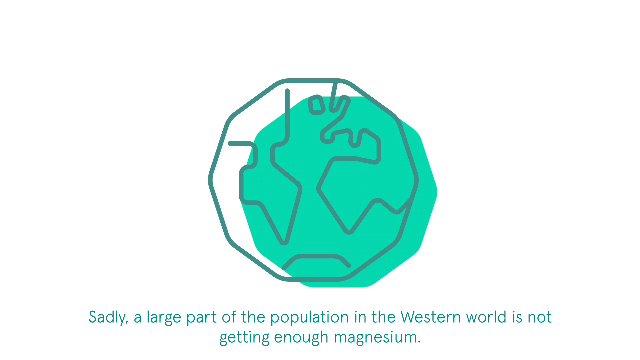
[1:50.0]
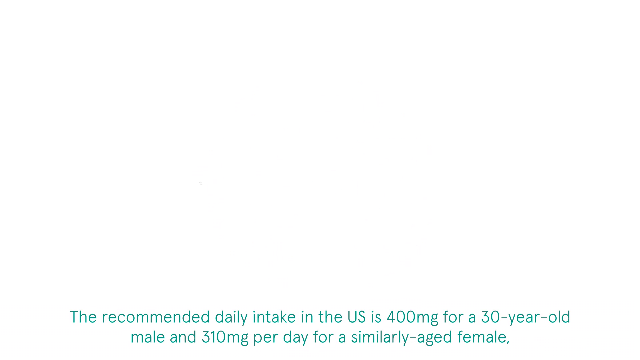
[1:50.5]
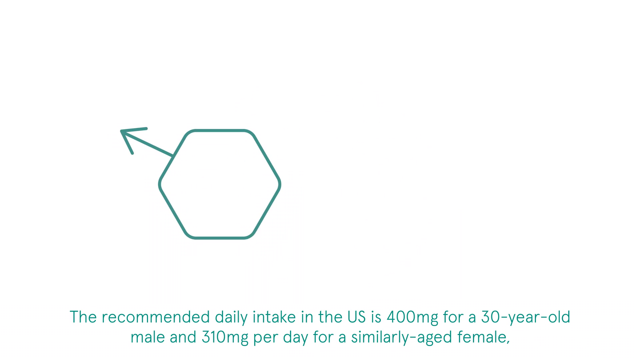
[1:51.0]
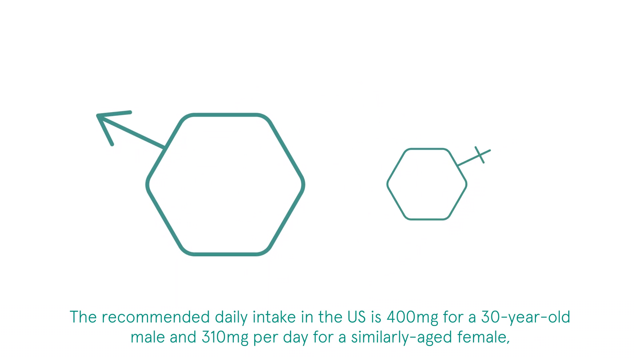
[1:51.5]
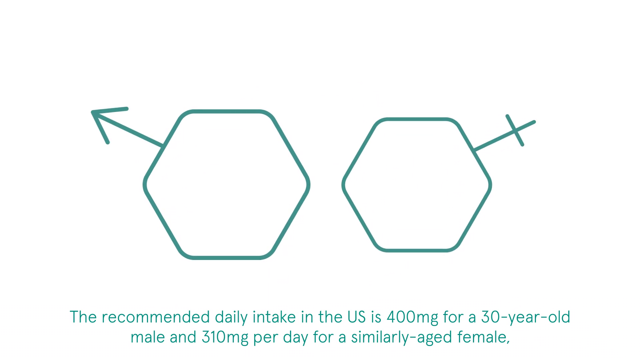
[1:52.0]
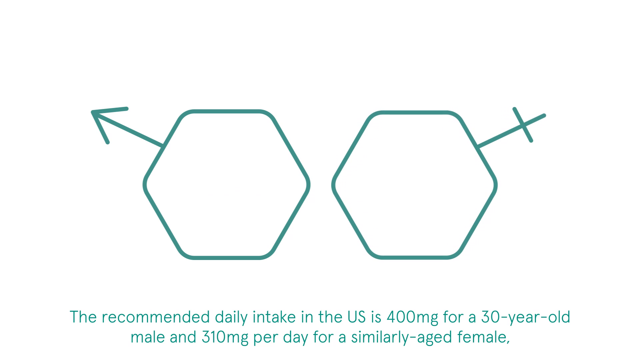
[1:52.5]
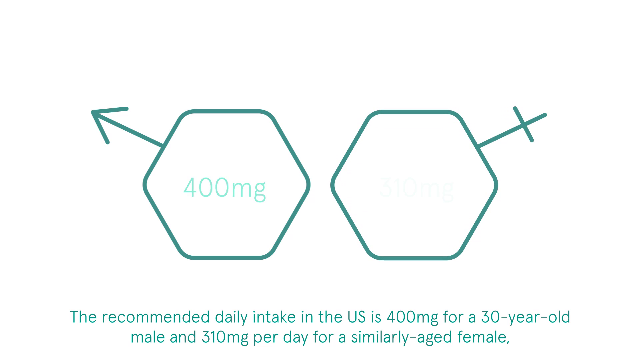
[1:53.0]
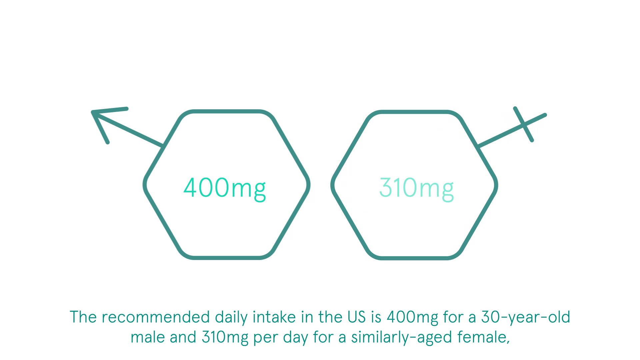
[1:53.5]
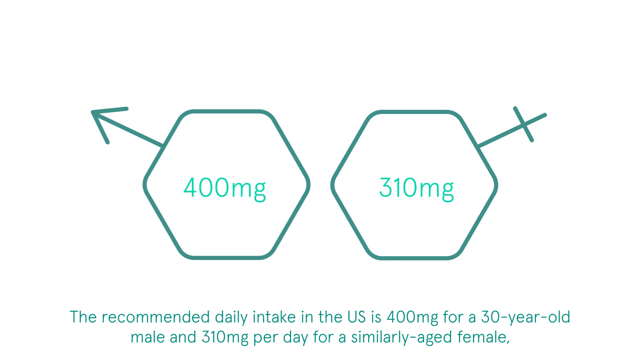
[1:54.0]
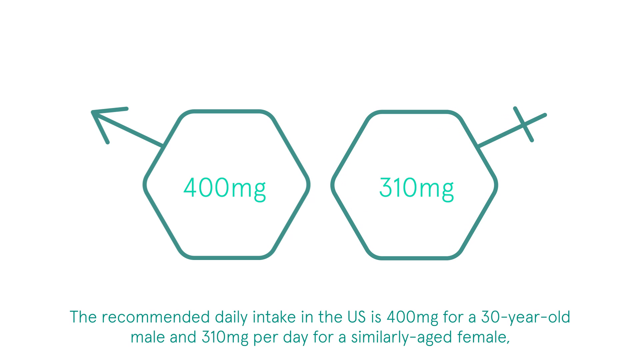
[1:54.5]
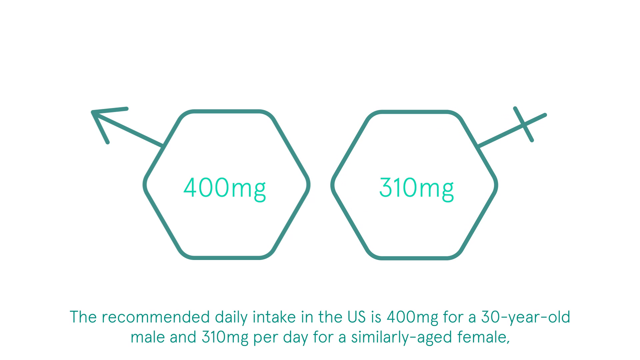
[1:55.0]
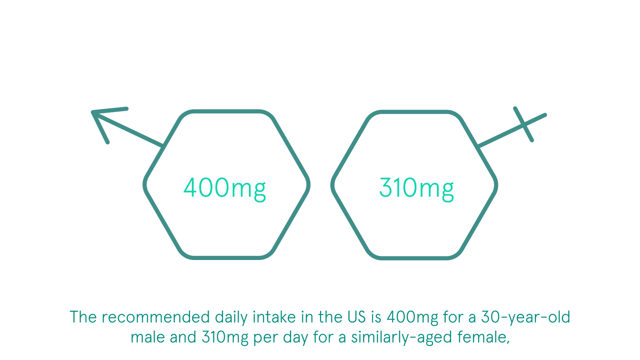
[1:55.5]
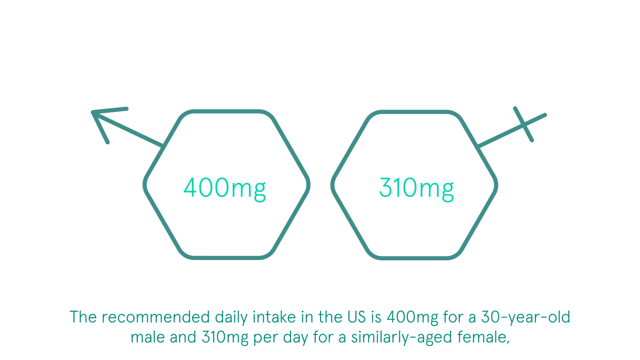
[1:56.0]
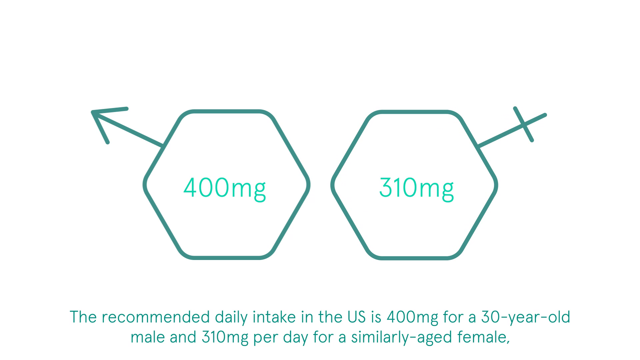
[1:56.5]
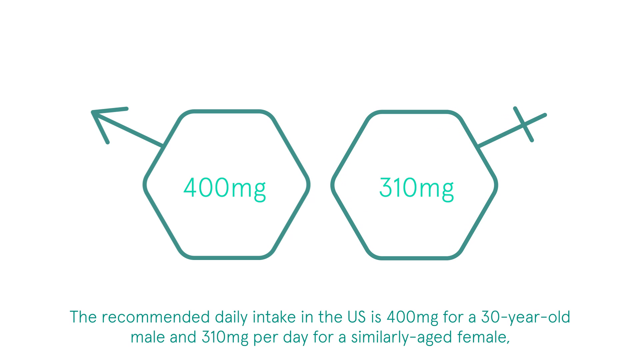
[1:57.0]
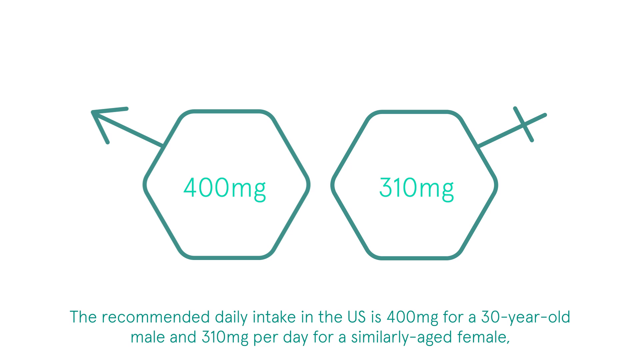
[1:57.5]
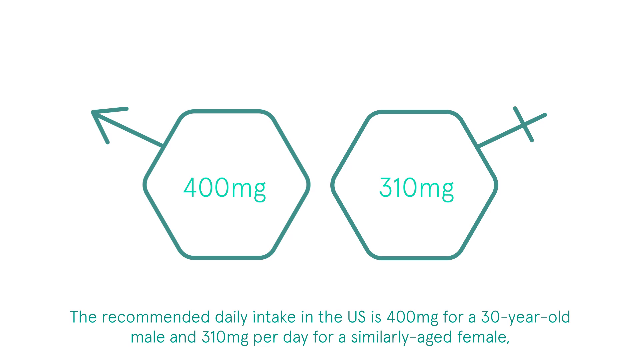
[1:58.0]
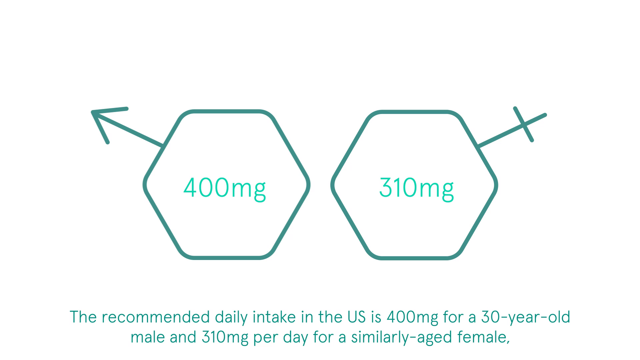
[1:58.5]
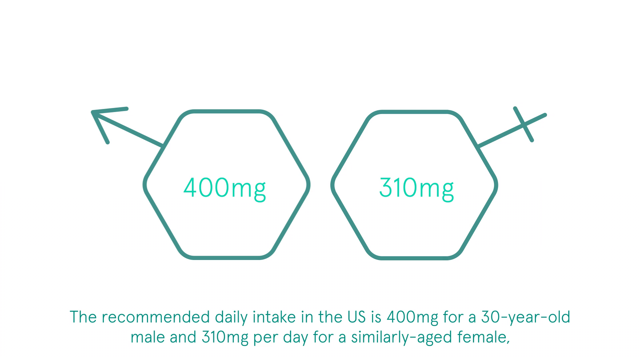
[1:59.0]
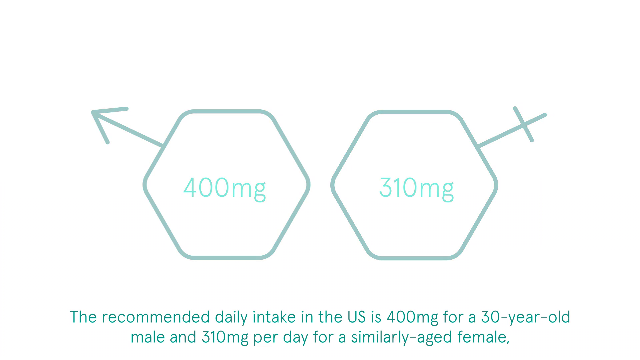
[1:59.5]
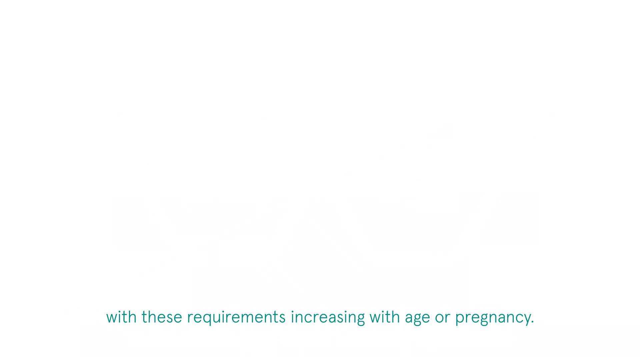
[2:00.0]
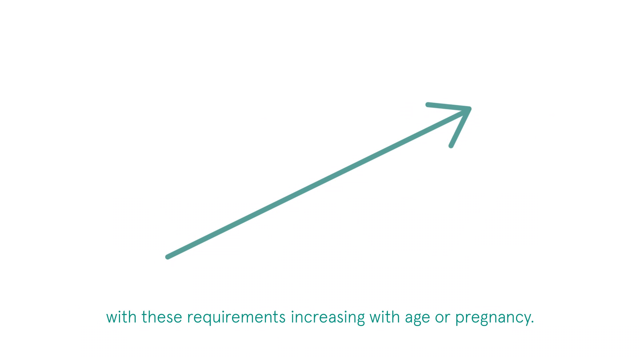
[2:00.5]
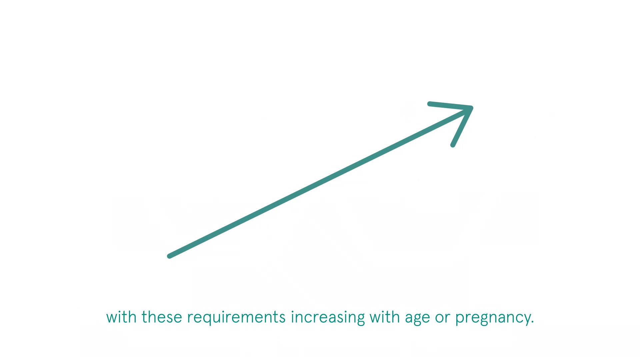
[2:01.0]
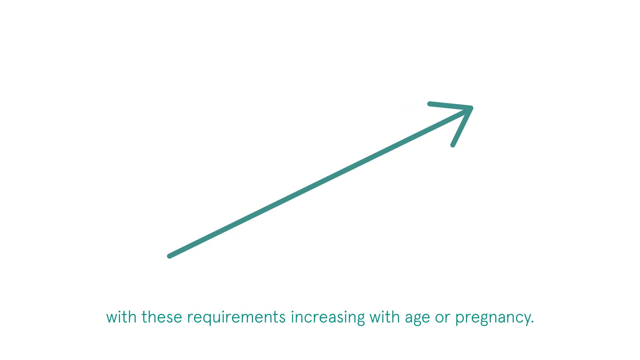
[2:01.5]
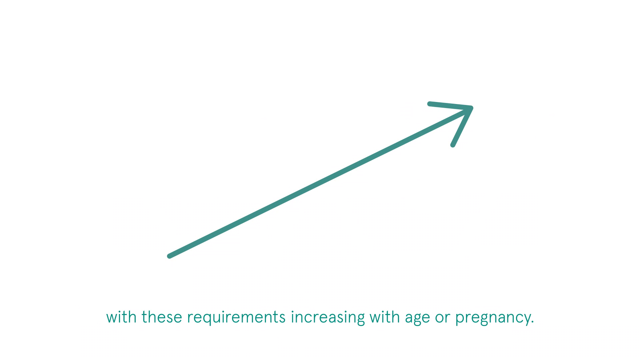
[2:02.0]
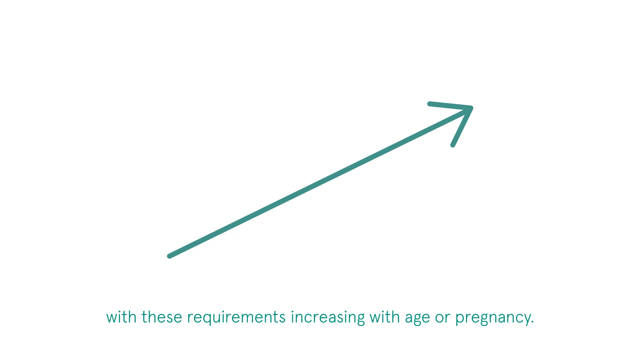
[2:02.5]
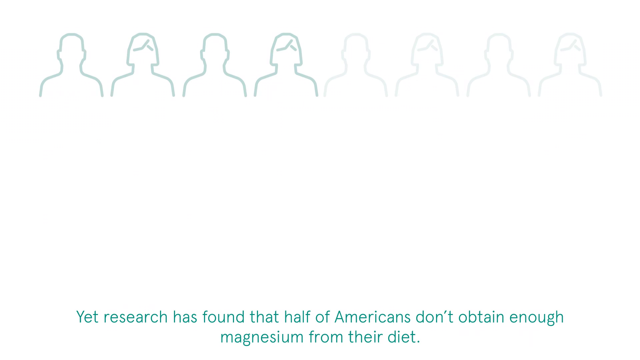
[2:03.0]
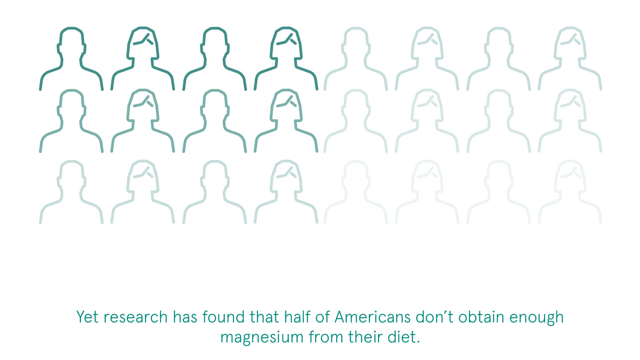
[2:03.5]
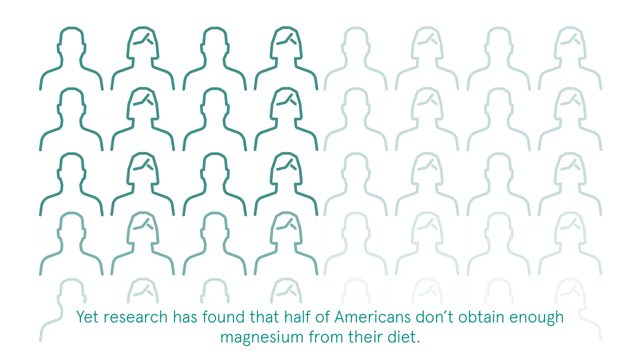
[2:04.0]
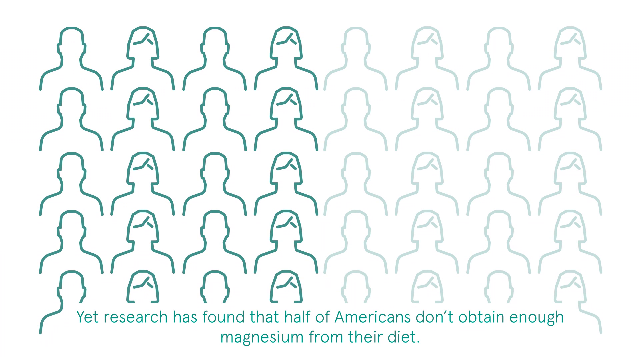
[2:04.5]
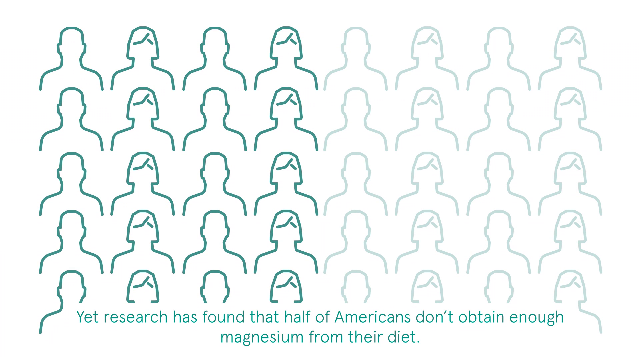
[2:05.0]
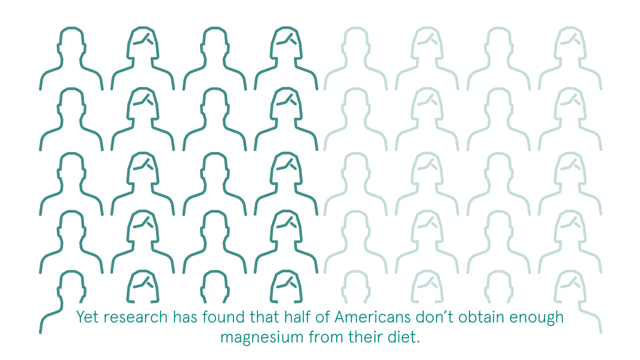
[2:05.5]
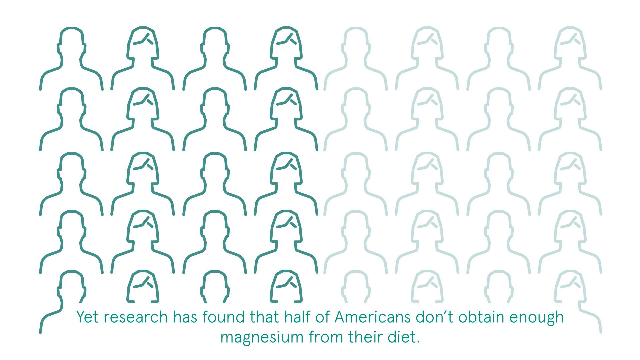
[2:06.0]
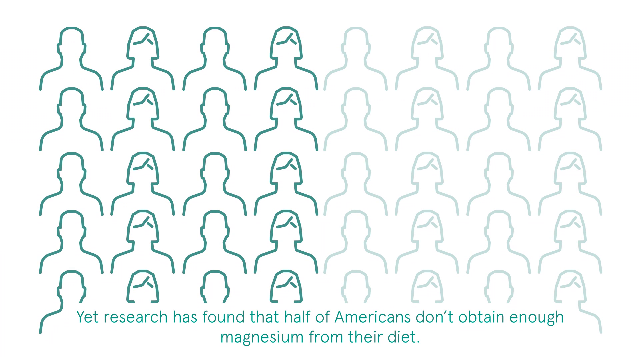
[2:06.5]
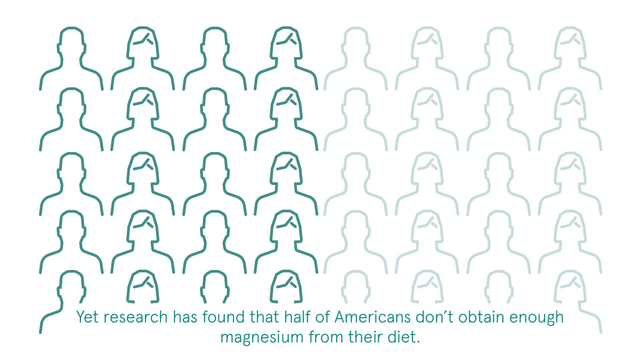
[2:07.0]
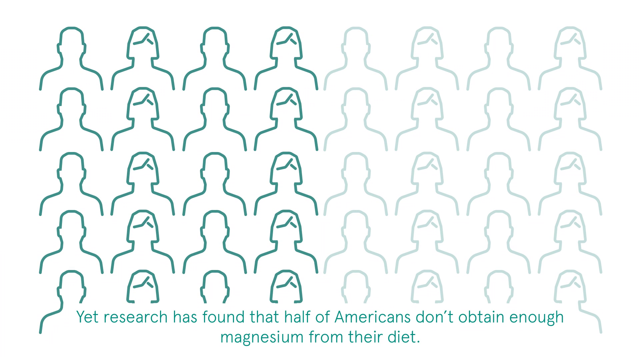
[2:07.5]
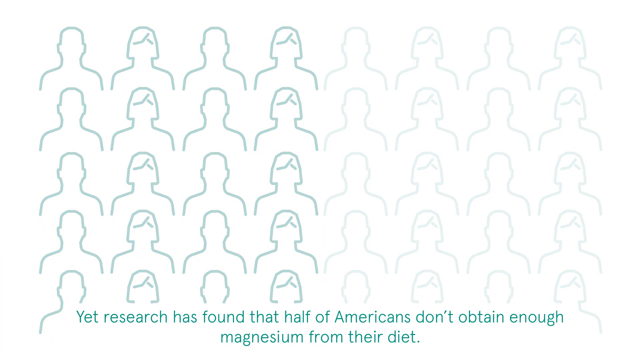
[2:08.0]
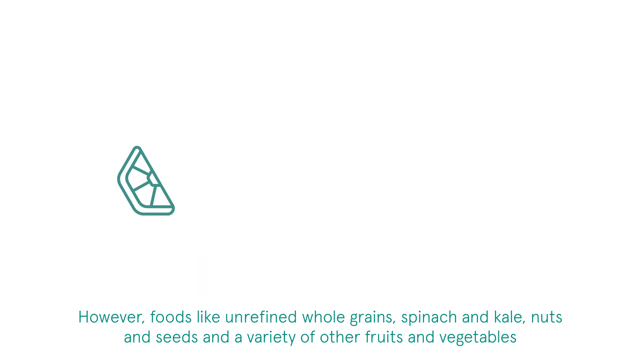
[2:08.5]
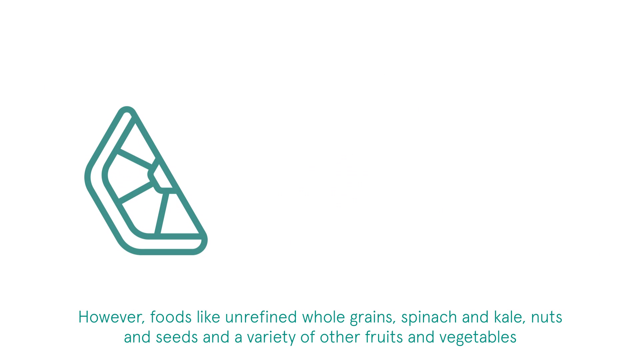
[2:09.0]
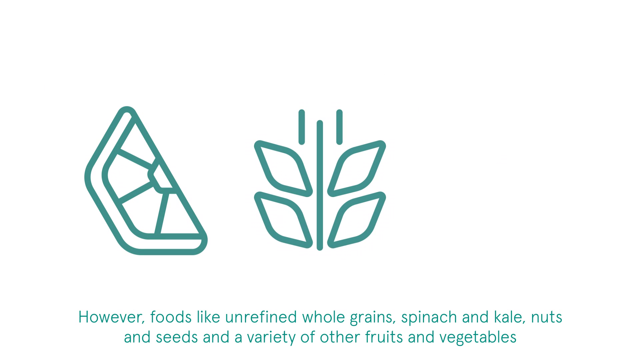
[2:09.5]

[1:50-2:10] Most of the slides show pictures drawn only as outlines of the objects. A globe appears, jagged and almost octagonal, with fake jagged continents rather than real ones. A green ten-sided decagon is superimposed on top. Teal letters at the bottom begin with "sadly" before the slide changes. Two hexagons follow: one has a male arrow sign and says "400 milligrams", and the other has a female sign and says "310 milligrams". Text at the bottom reads "The recommended daily intake in the US is 400 milligrams for a 30 year old male." An arrow appears. The scene then changes to a population of people, with women and men alternating. Each woman has something drawn on her head, apparently hair.